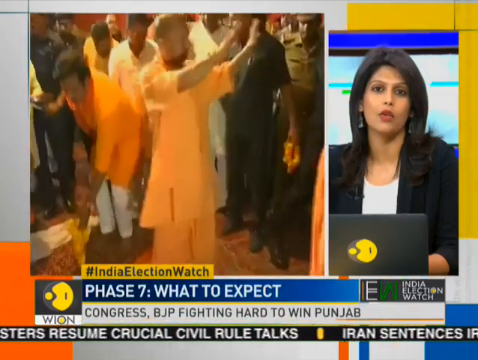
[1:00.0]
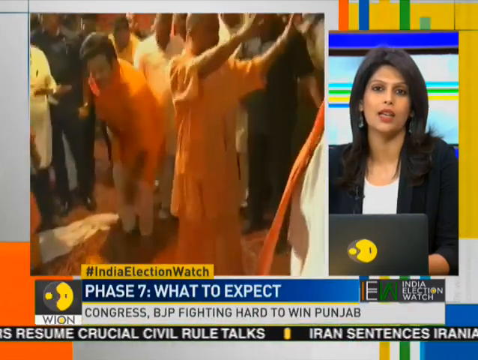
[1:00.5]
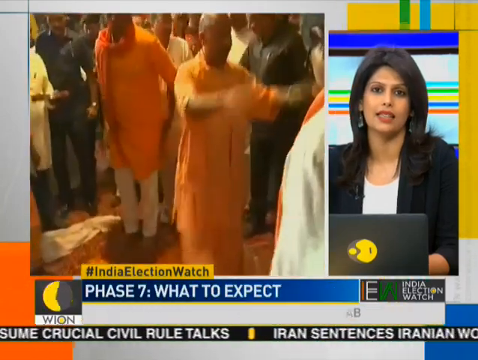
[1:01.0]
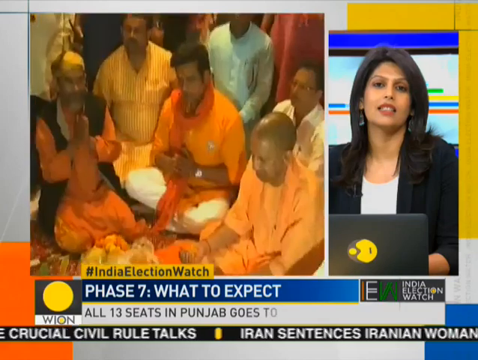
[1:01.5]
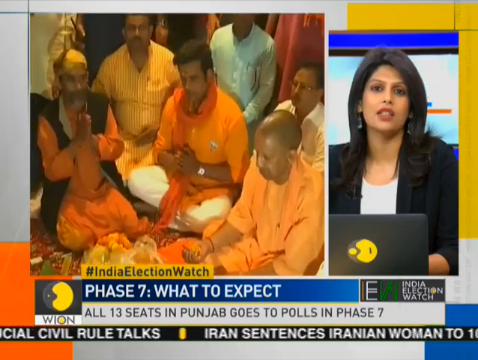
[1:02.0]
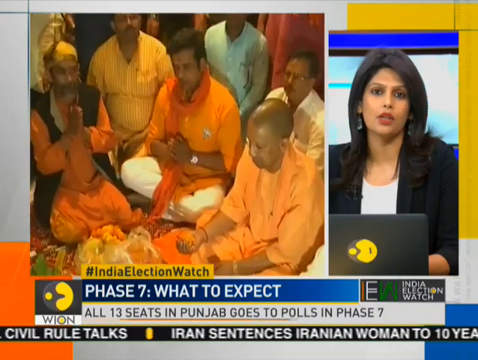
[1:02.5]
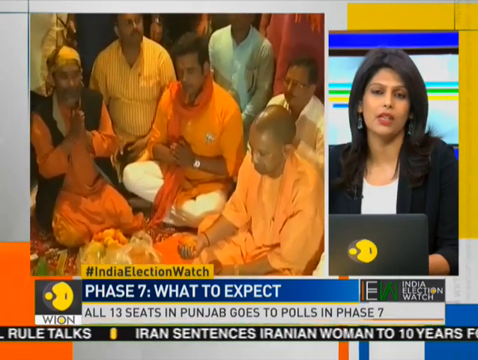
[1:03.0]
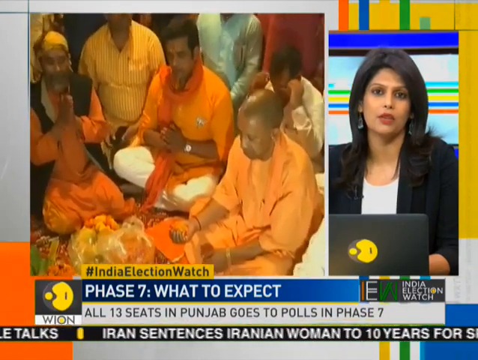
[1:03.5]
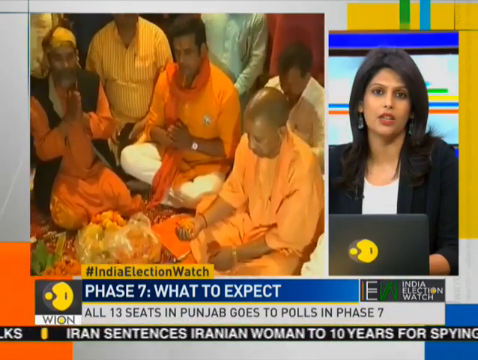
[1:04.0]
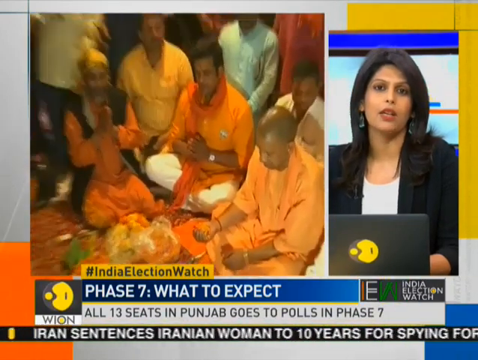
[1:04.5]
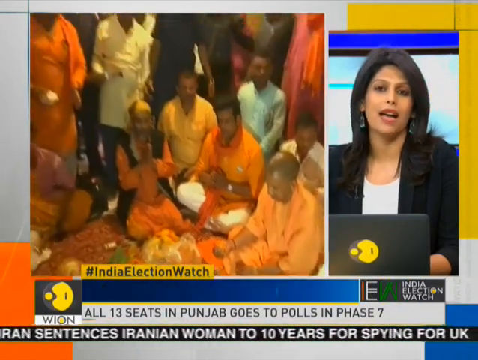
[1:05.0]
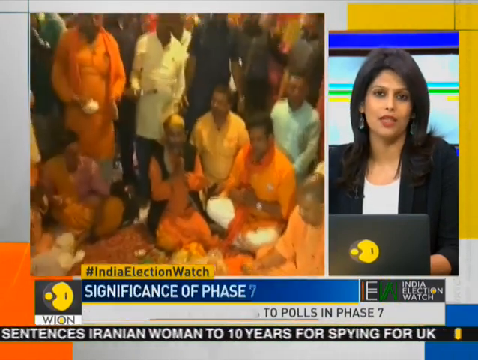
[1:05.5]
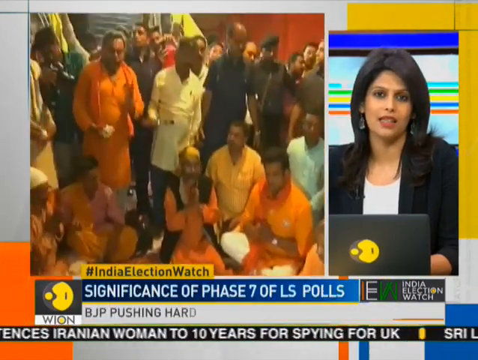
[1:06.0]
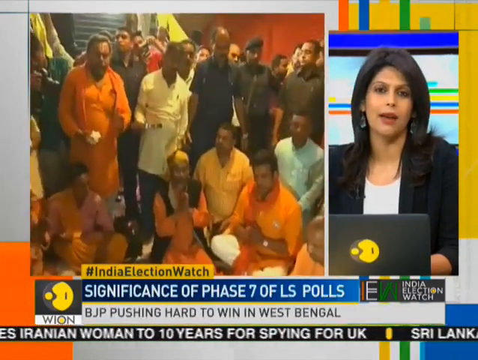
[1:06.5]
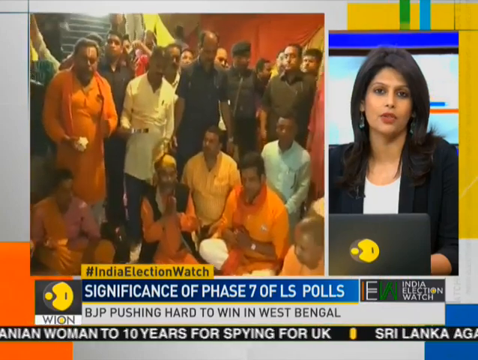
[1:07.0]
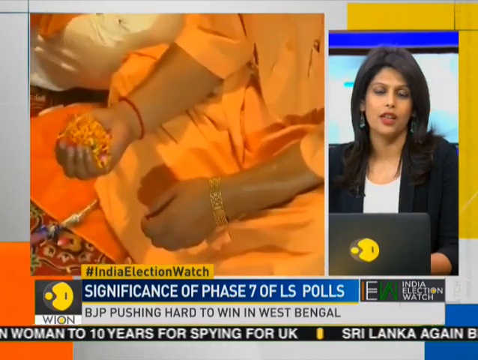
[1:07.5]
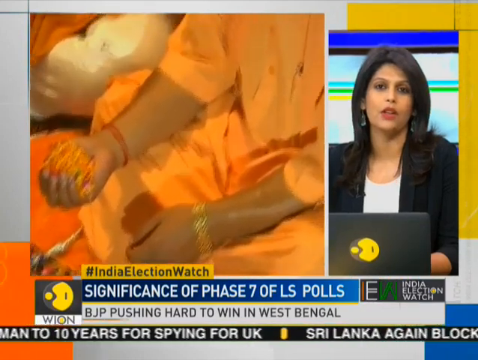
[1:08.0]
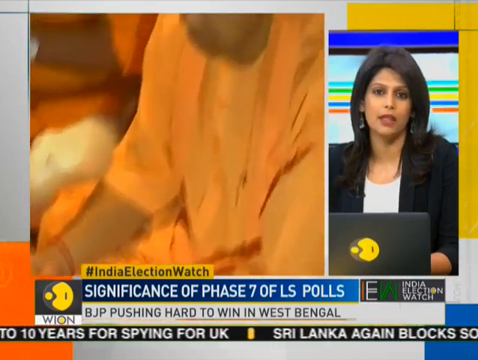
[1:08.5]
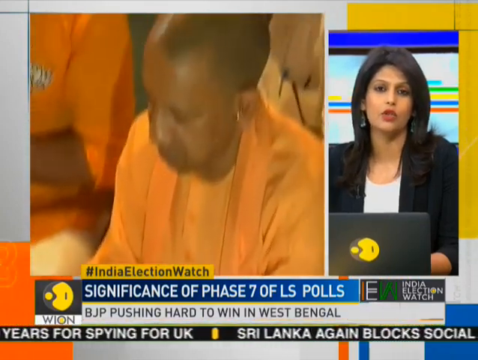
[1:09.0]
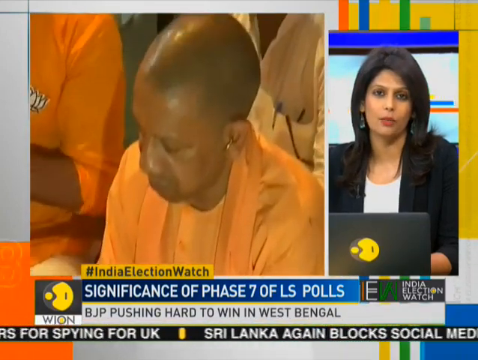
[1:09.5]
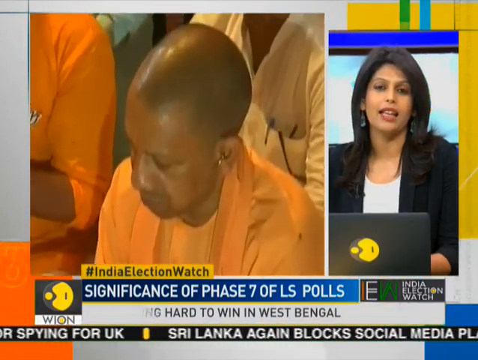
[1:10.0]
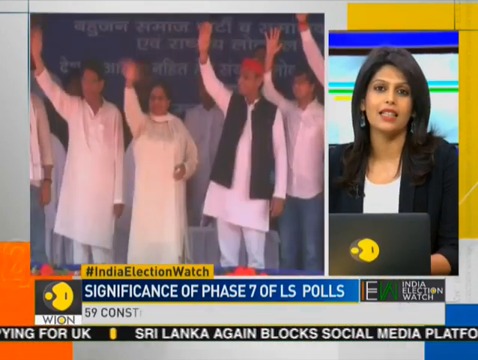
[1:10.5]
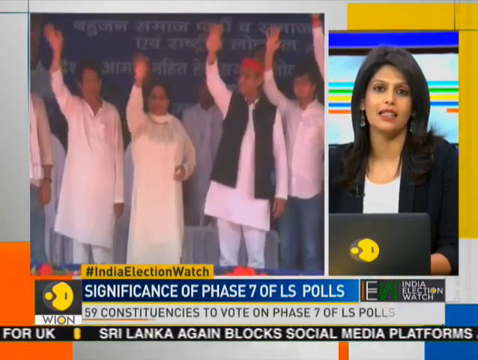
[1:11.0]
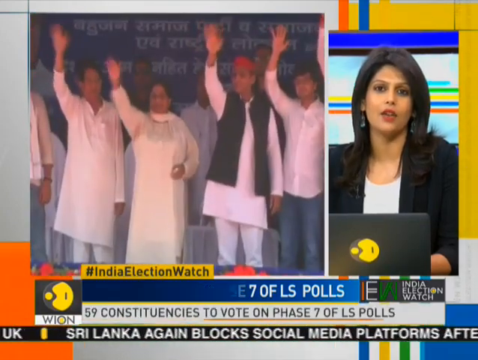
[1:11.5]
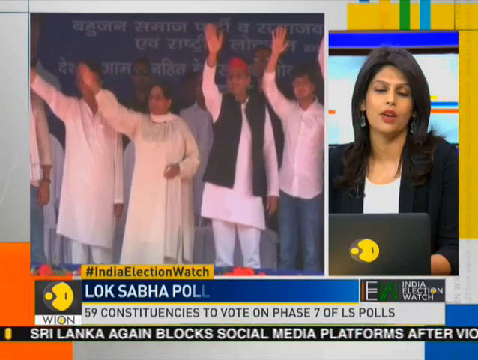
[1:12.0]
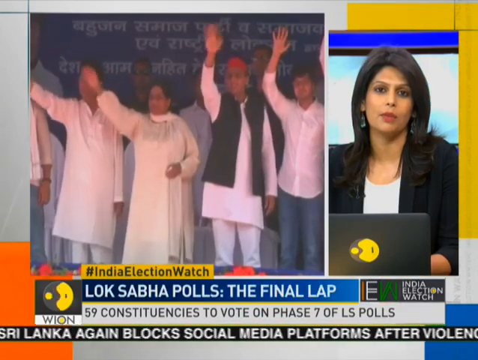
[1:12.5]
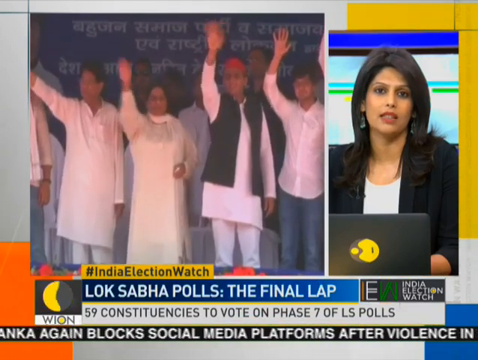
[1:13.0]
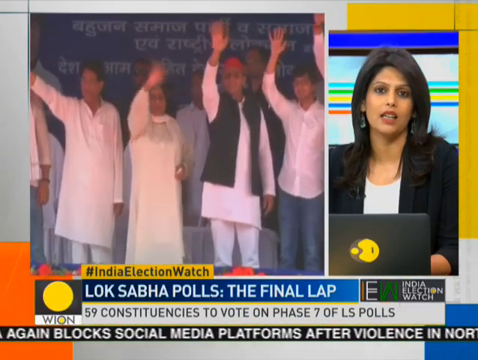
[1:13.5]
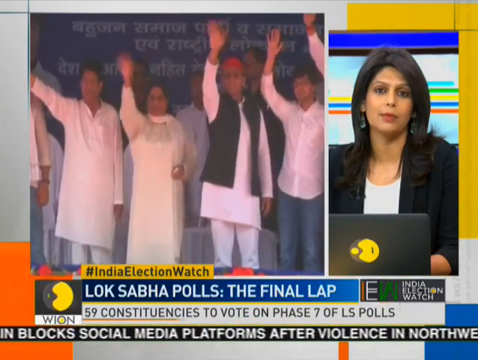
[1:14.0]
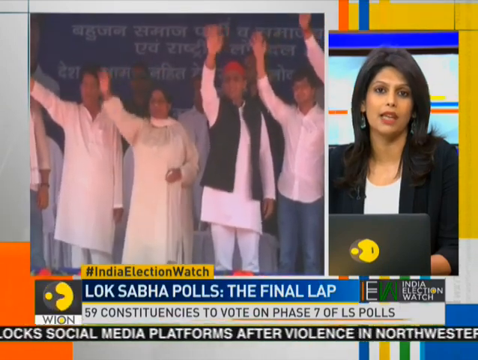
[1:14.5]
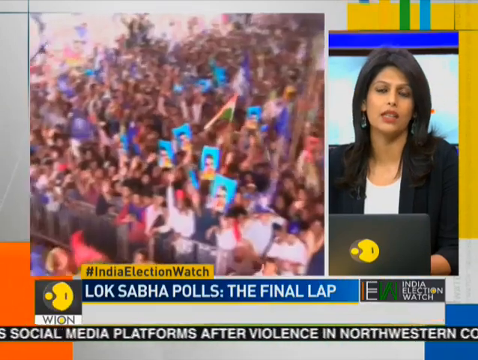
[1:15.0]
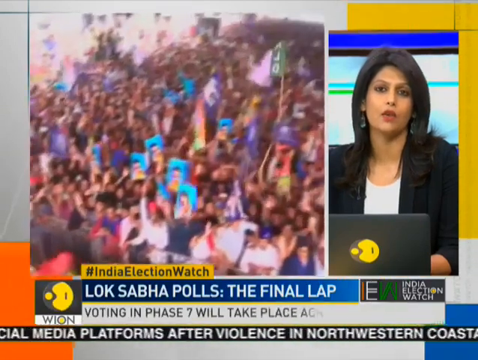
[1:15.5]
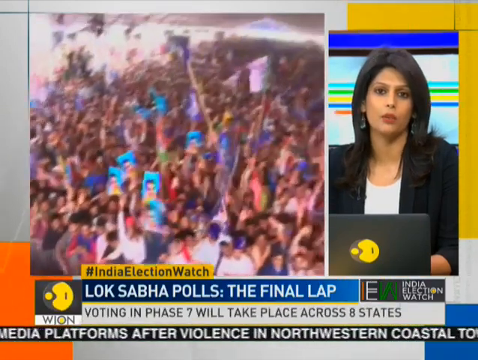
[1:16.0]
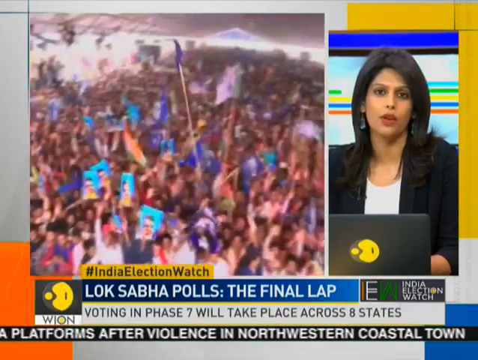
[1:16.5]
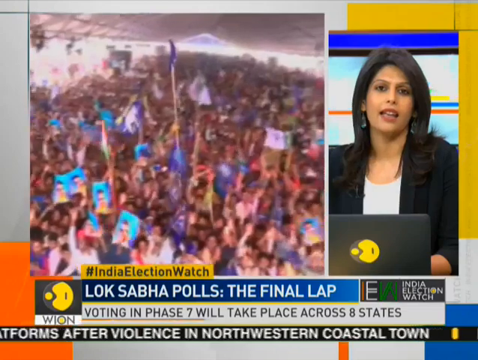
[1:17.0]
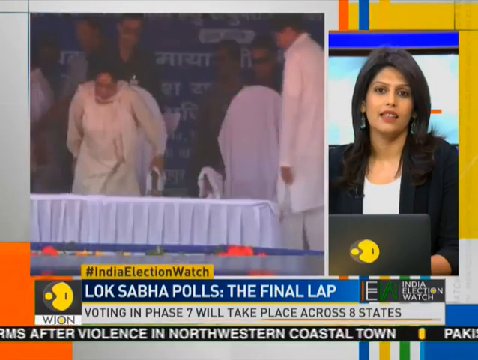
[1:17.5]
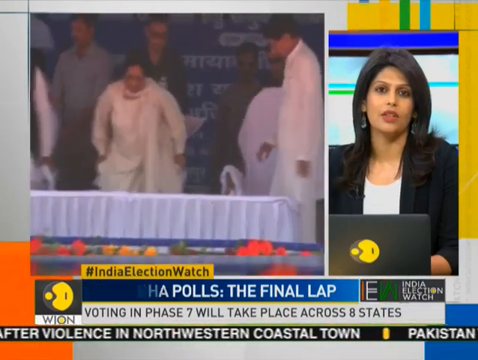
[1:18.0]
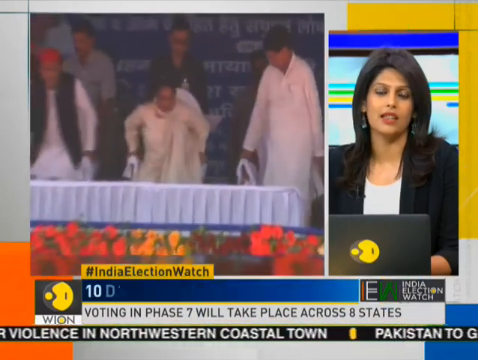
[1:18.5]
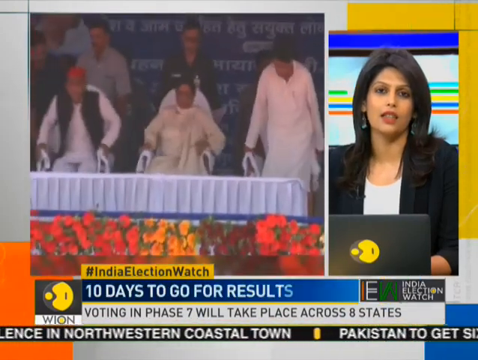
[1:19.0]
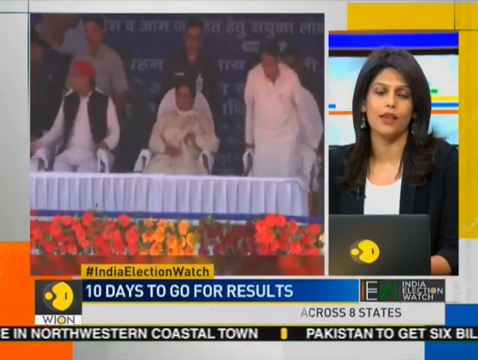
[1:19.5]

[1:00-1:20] The anchor is on the right side in the smaller frame, still in the newsroom operating the laptop, apparently explaining or reading the news. Text reads "election watch phase seven what to expect" and "Congress BJP fighting hard to win Punjab." A gentleman wearing all orange greets people while surrounded by others, with a policeman at the back. Then they sit down praying while others stand talking to each other. A group of men stand behind, some in police uniform, and they are eating. The bald man in the orange attire holds something like rice in his right hand. Another scene shows people waving to the crowd, with writing at the back; one person wears a black vest and a red hat. Another scene shows people with banners, apparently of the leader they want to elect, or possibly protesting. Faces are visible, and some people are sitting down, along with those waving.